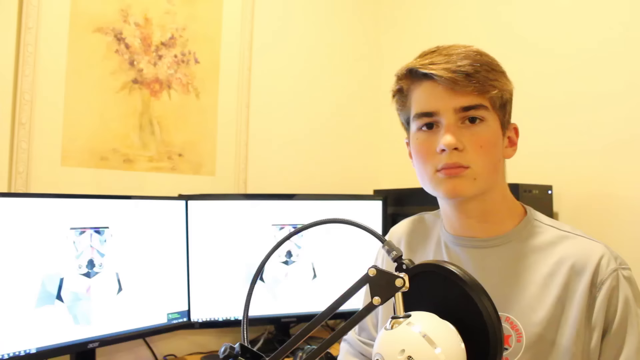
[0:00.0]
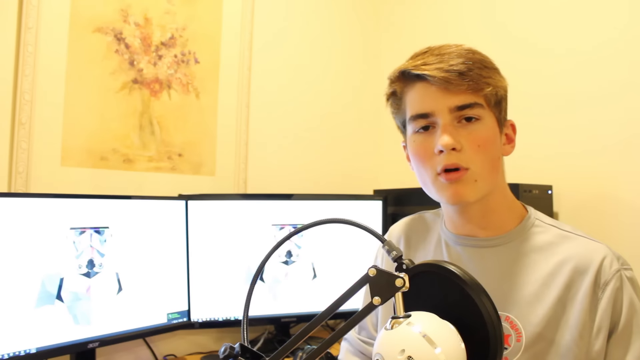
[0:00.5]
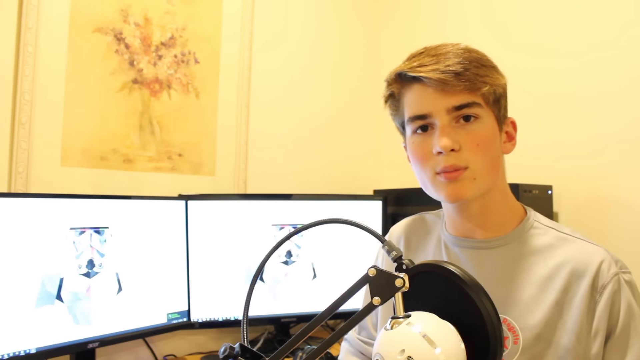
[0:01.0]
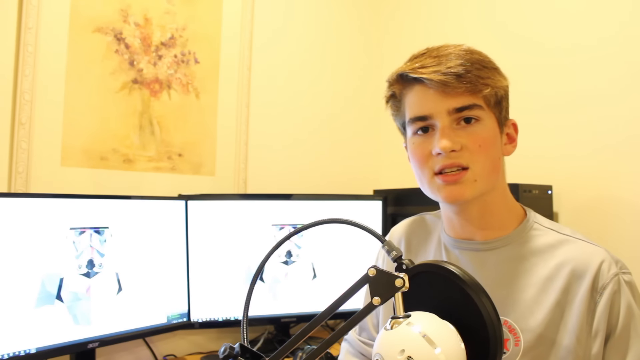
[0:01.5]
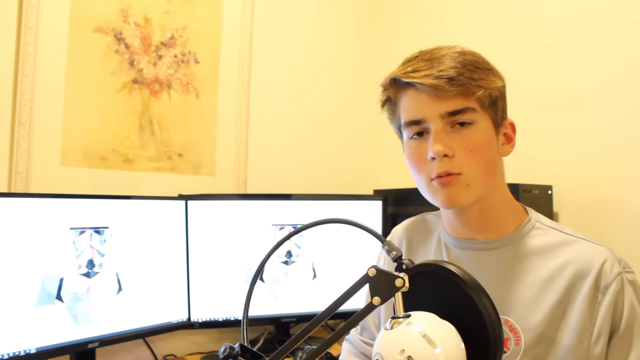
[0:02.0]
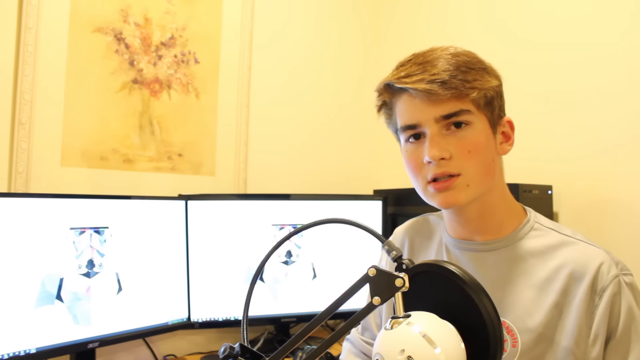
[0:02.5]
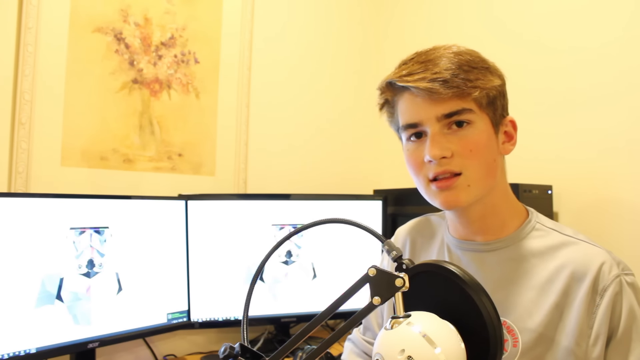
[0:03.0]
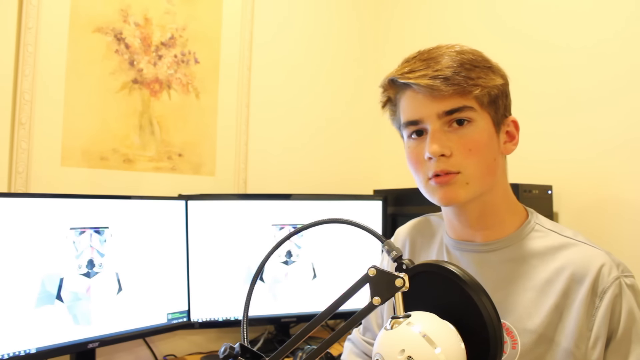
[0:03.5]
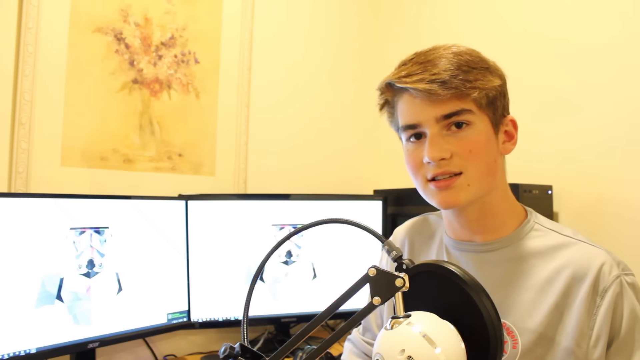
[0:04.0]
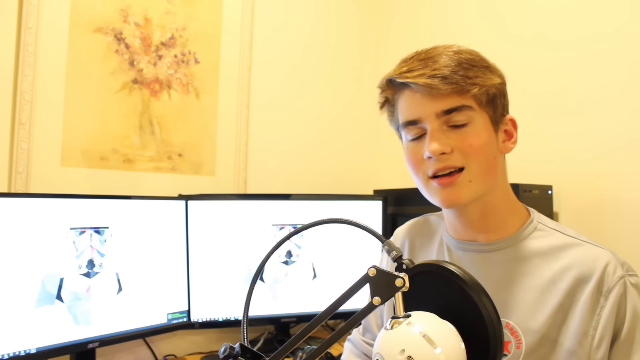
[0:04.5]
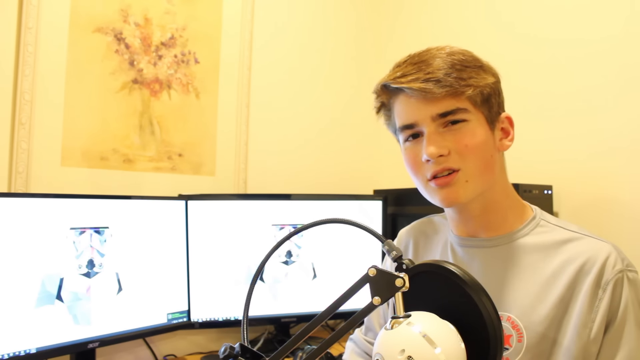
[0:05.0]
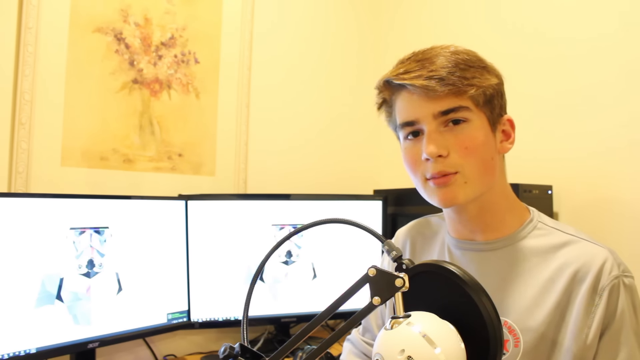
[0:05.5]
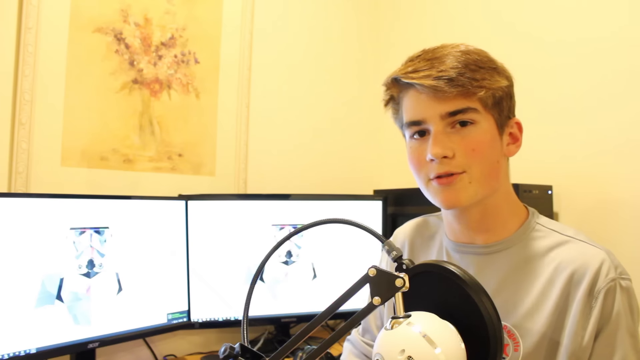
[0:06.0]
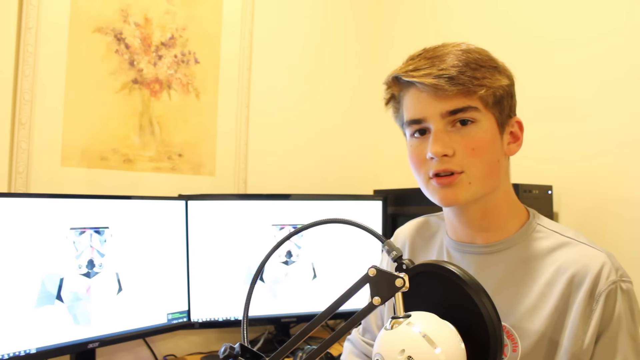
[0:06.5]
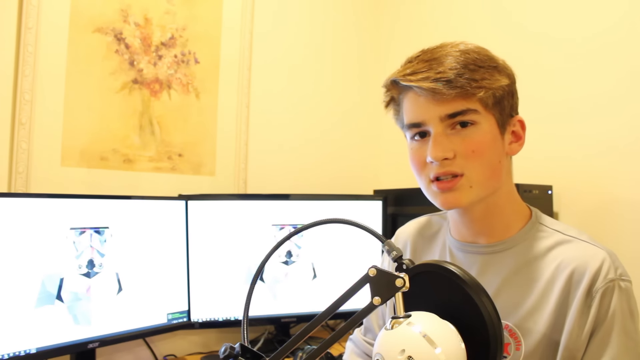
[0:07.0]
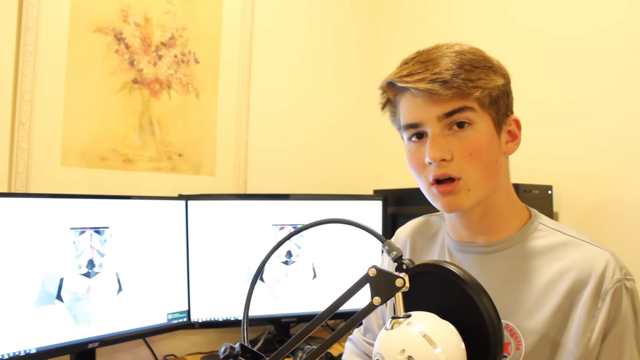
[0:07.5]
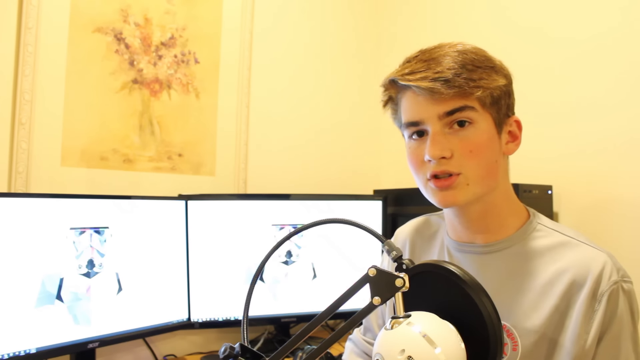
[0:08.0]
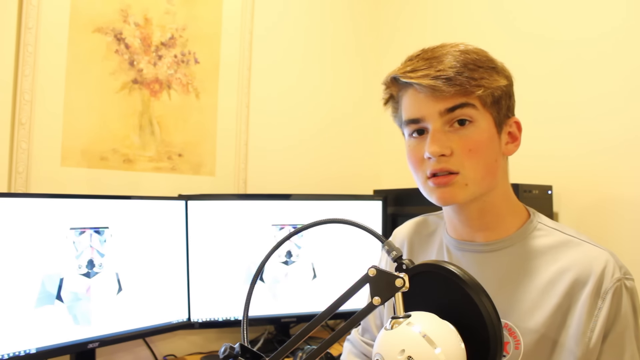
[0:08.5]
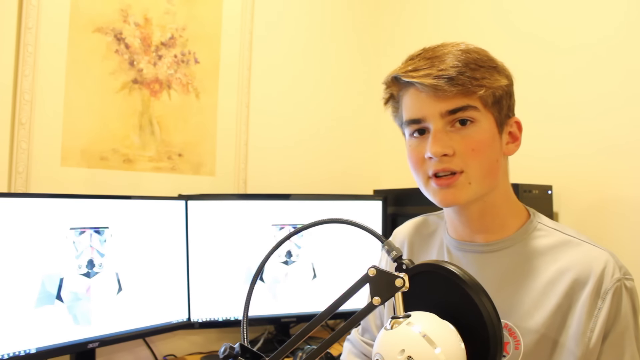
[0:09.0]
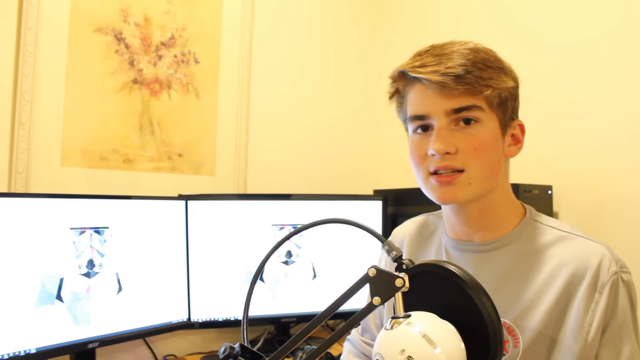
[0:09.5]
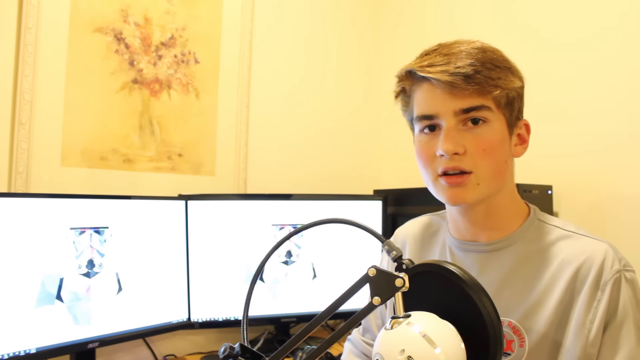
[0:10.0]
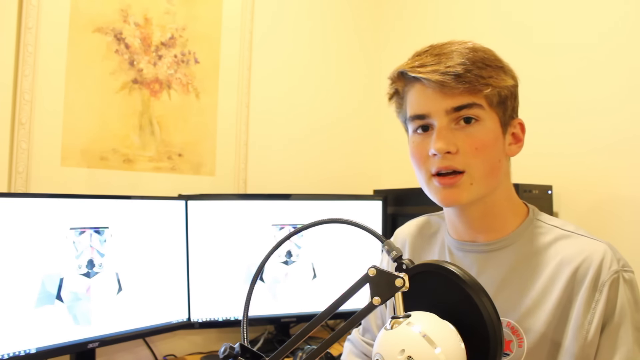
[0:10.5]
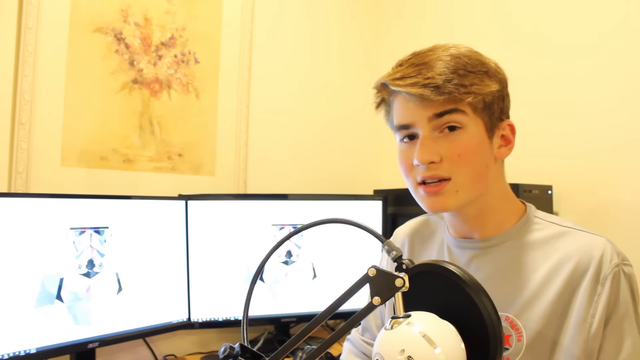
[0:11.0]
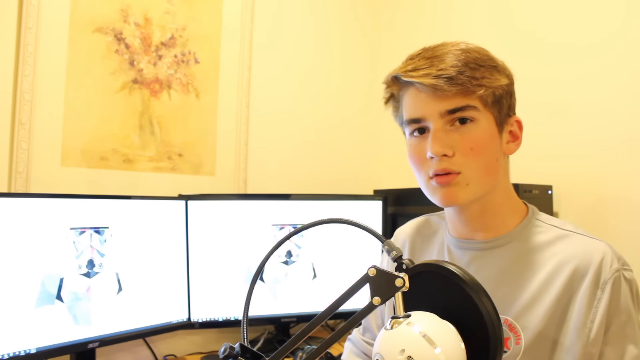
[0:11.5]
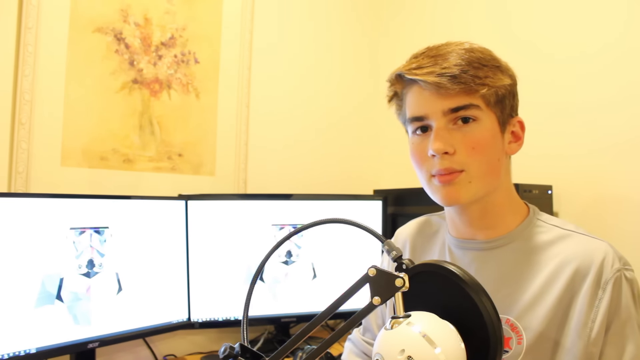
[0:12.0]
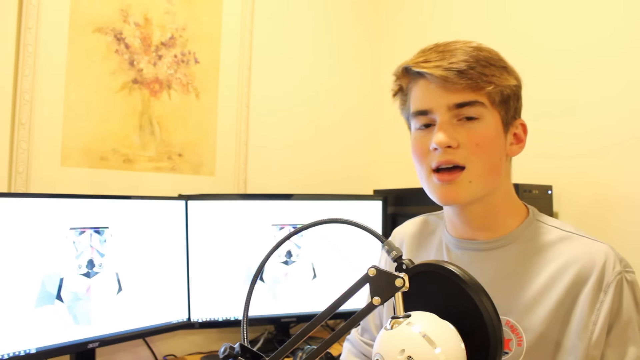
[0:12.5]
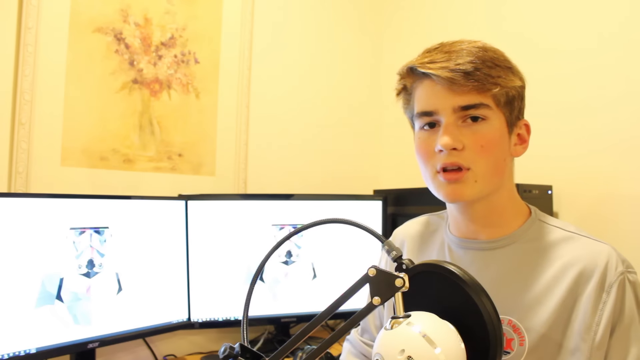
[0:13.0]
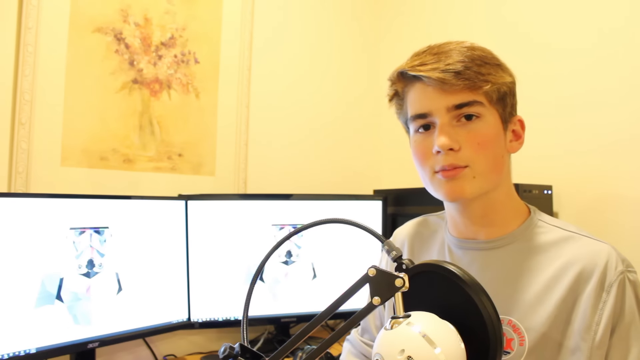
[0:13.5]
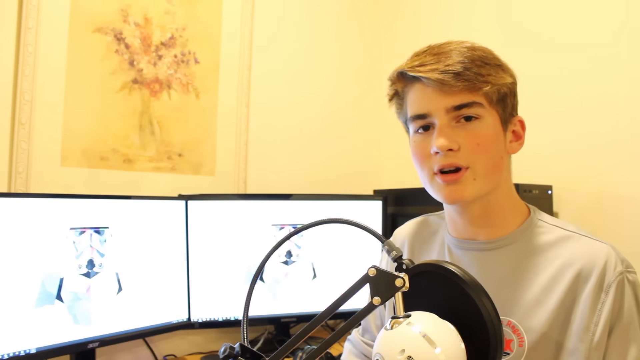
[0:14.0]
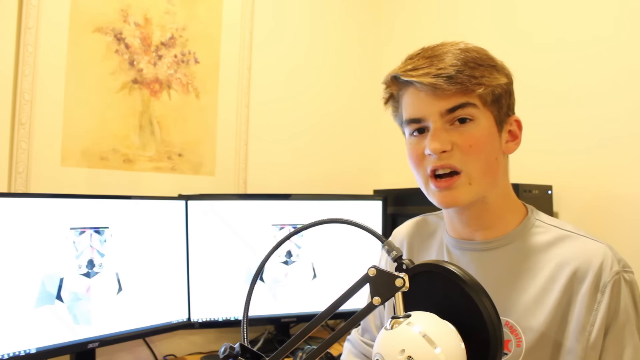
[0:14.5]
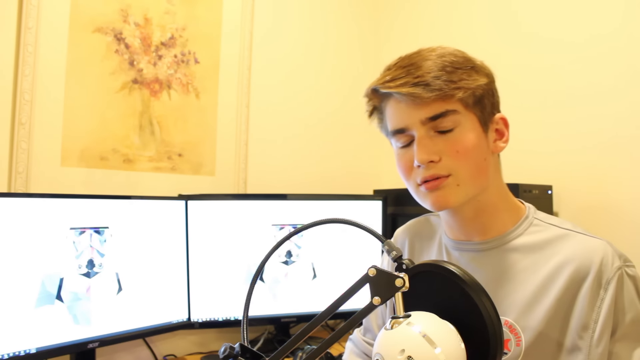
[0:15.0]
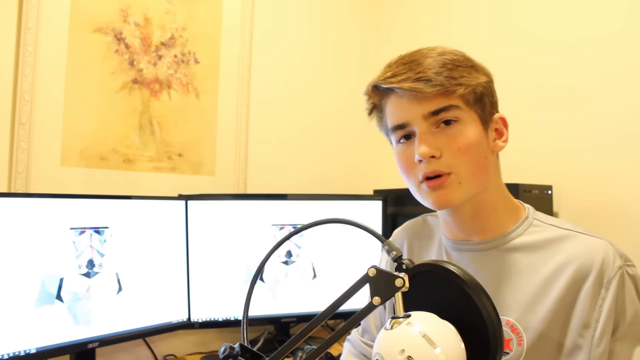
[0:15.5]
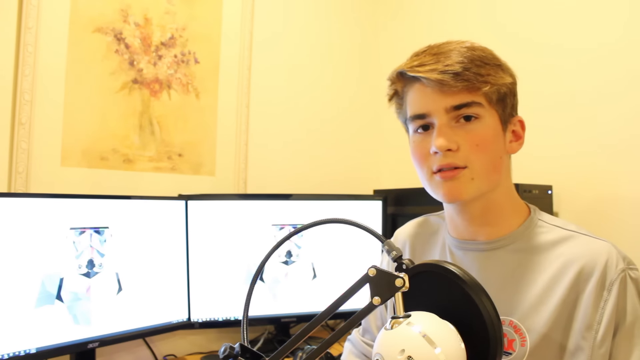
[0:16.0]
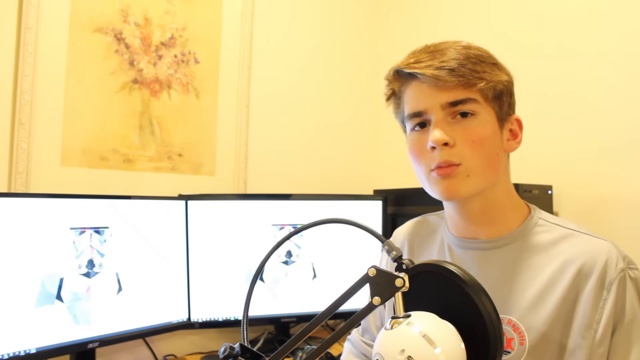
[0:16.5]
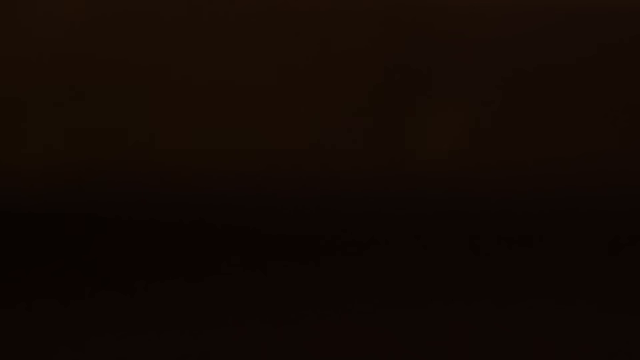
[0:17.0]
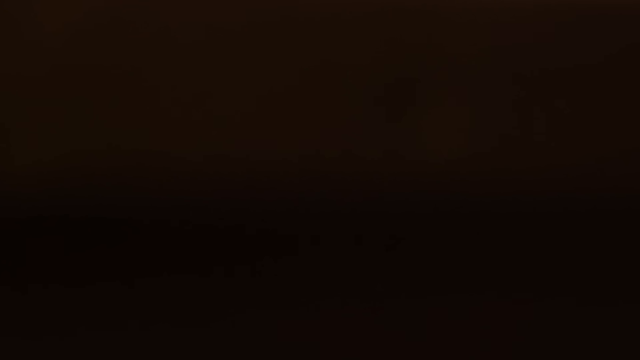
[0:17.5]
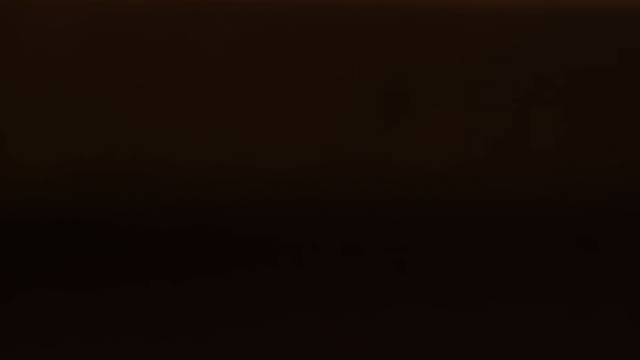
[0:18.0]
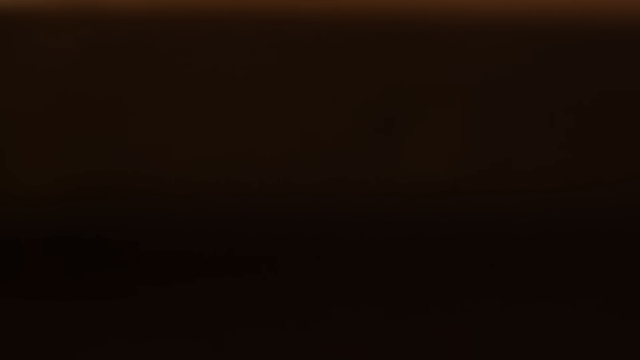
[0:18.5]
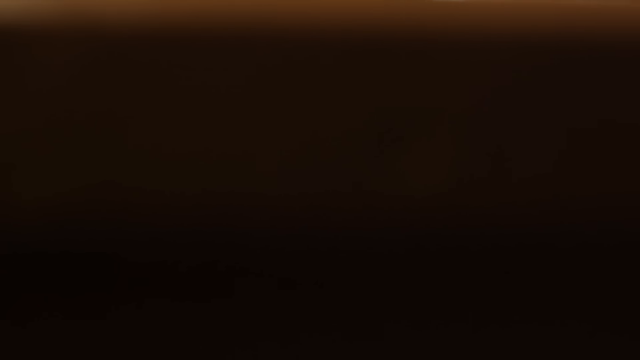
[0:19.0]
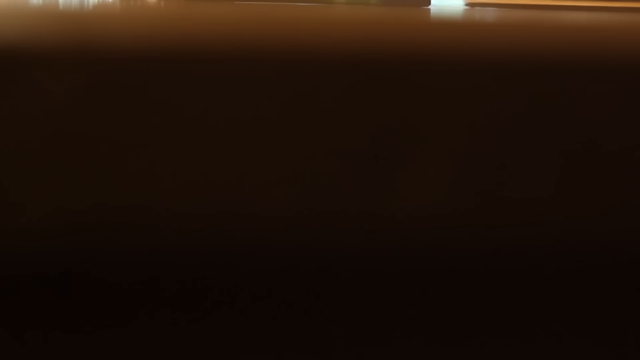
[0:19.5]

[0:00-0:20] A young man sits in front of a microphone, speaking and looking directly at the camera. He has short brown hair and wears a gray shirt with a collar. He is a white man in his 20s, or possibly a teenager, sitting at a counter, table or desk and speaking into a large, round, black microphone. Behind him are a couple of computer monitors whose screens are washed out by the light; they look white with some kind of design, possibly stormtroopers. The walls in the background are pale yellow, and a painting of a bunch of flowers and a vase hangs on the wall. It is hard to see, but the painting appears to have a pale yellow background with some purple and red flowers, and it is very delicate. While he speaks steadily, his expression is fairly neutral; he moves his head around a little but does not really gesture. The screen then goes black, and a slow shot begins panning upward, apparently toward the front of his desk, where there may be some items.